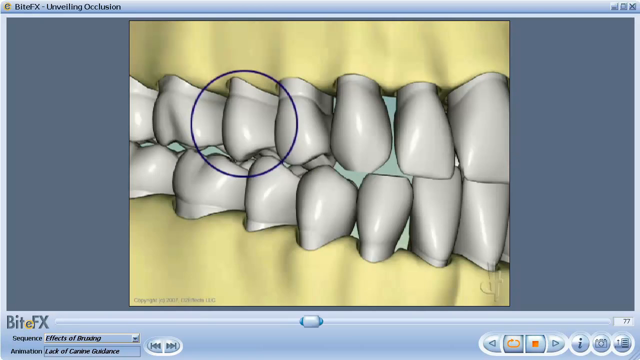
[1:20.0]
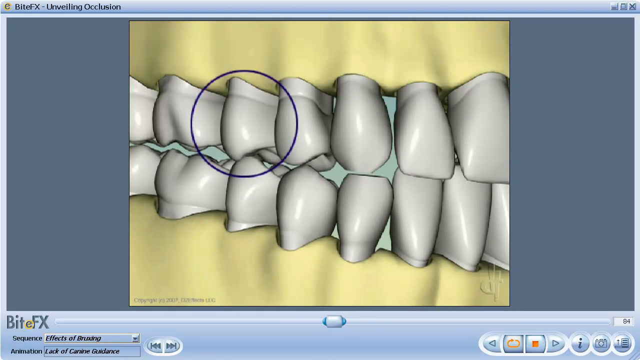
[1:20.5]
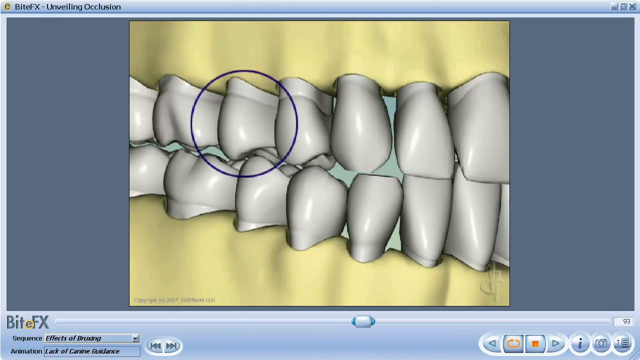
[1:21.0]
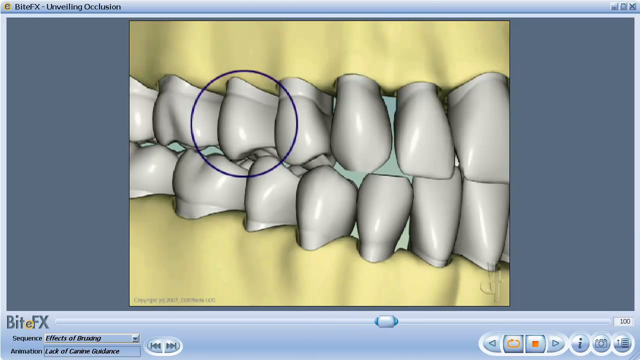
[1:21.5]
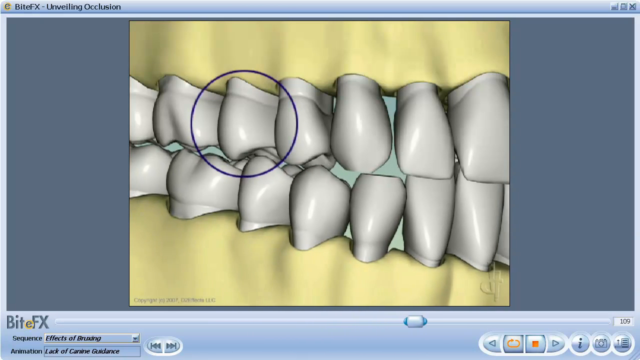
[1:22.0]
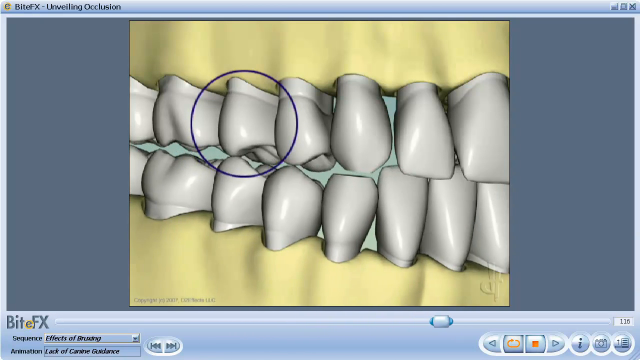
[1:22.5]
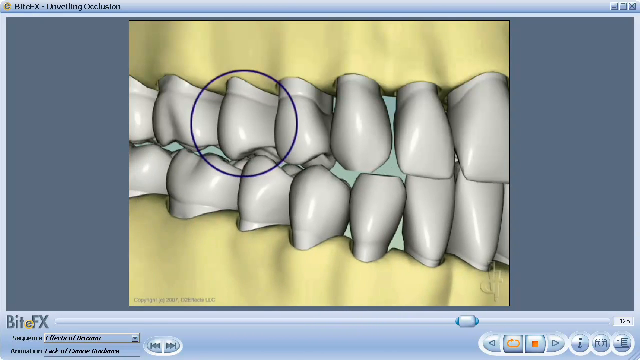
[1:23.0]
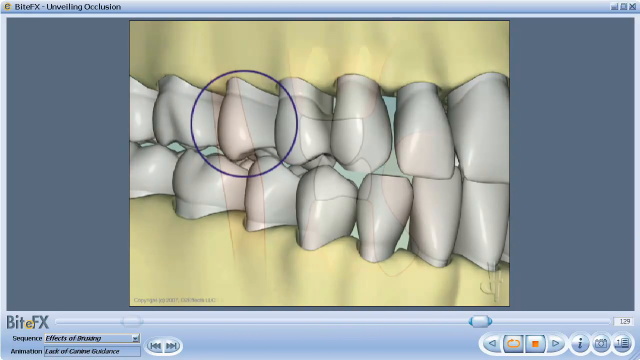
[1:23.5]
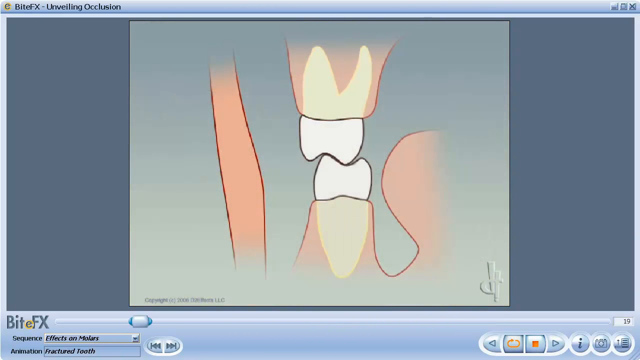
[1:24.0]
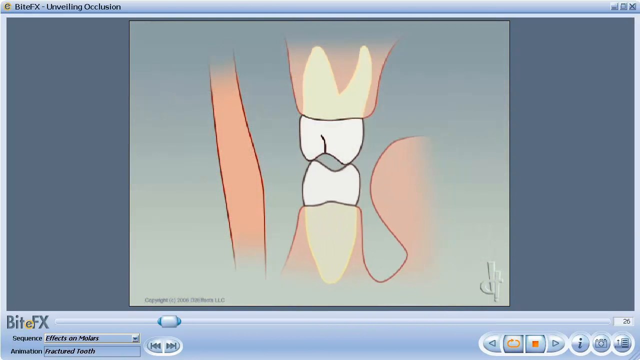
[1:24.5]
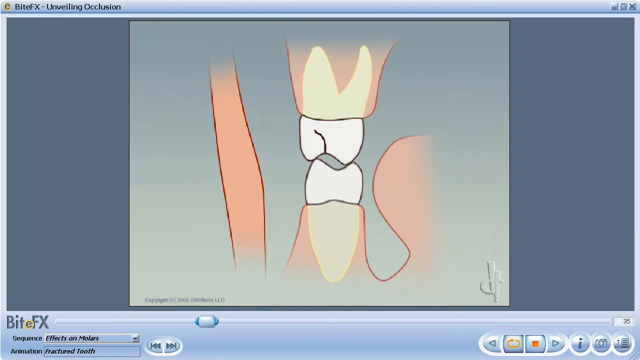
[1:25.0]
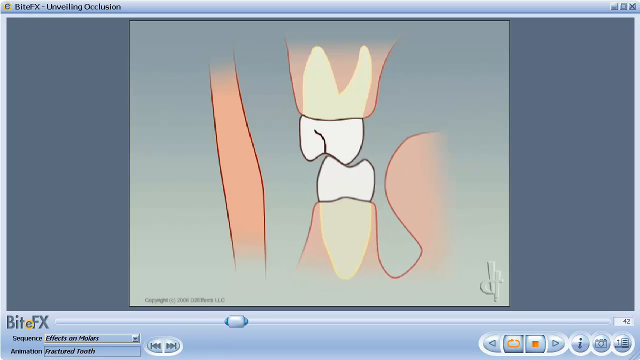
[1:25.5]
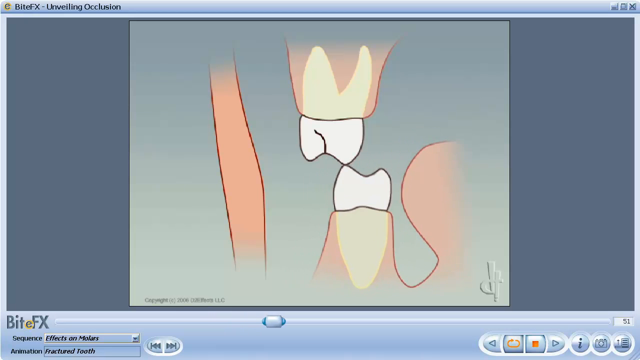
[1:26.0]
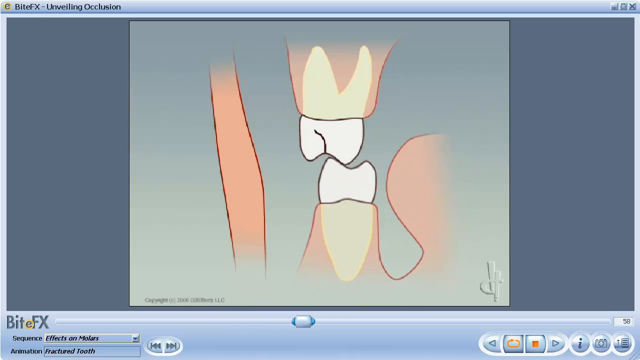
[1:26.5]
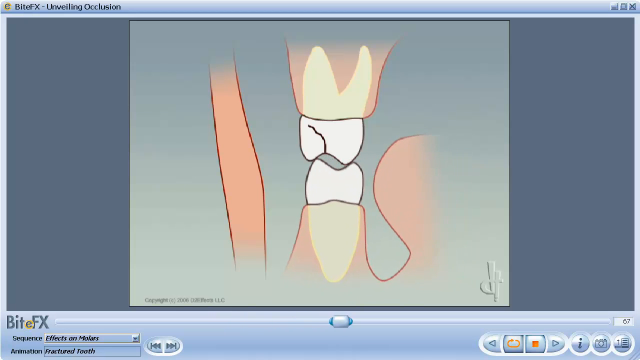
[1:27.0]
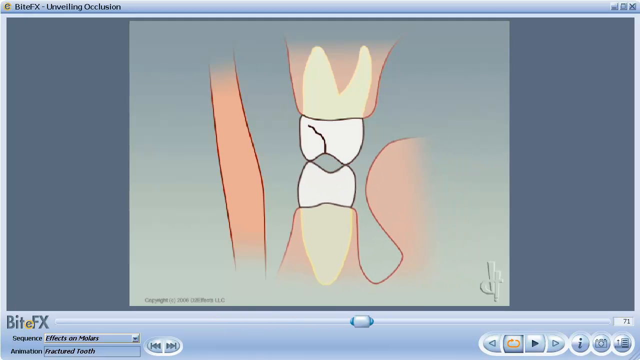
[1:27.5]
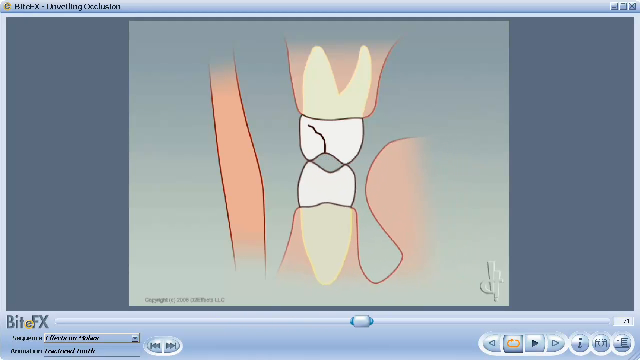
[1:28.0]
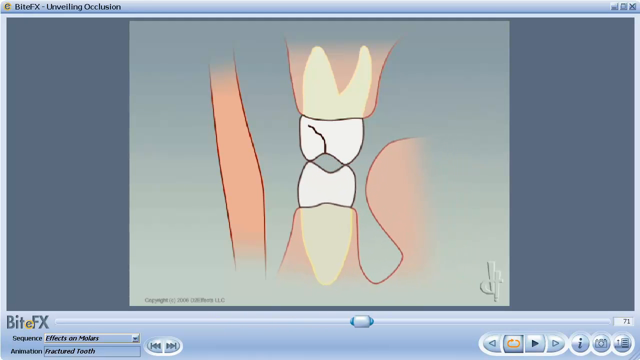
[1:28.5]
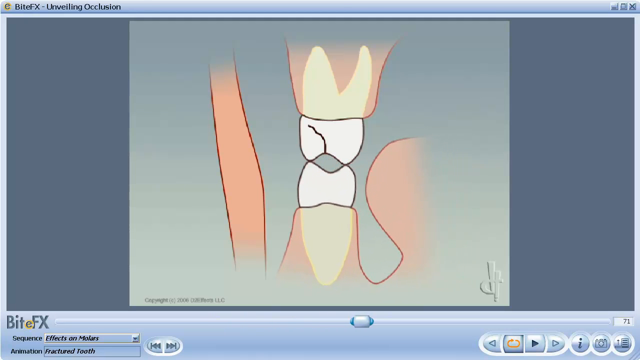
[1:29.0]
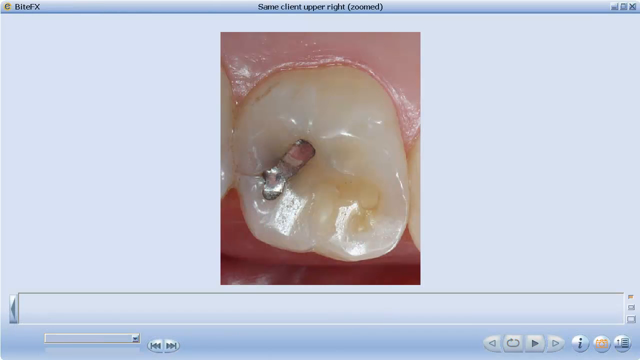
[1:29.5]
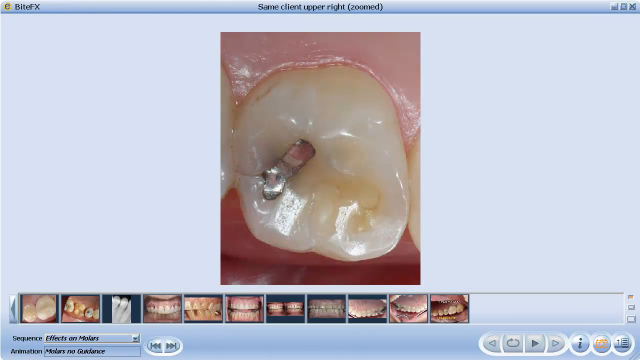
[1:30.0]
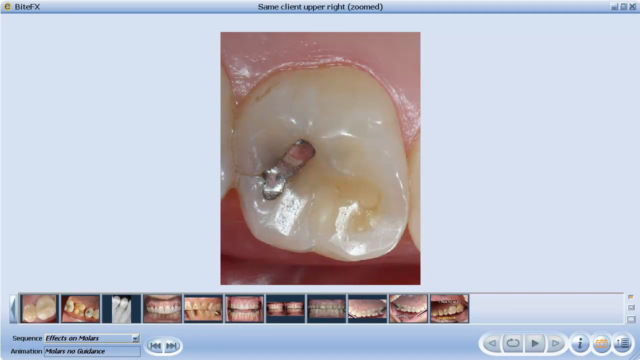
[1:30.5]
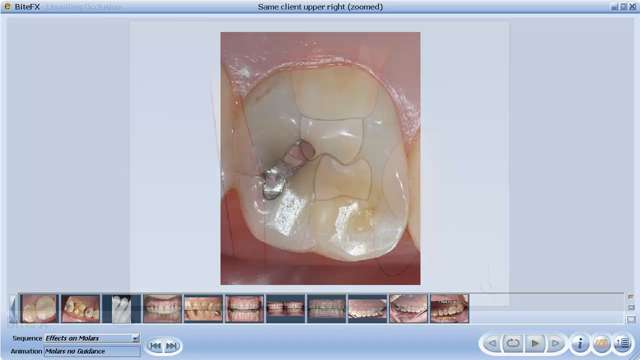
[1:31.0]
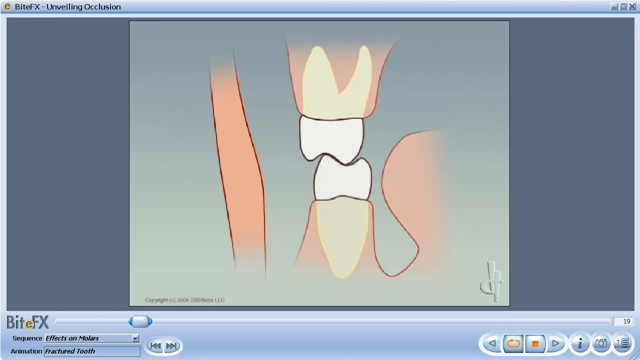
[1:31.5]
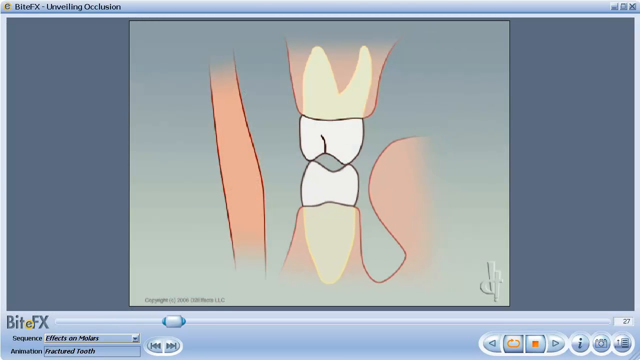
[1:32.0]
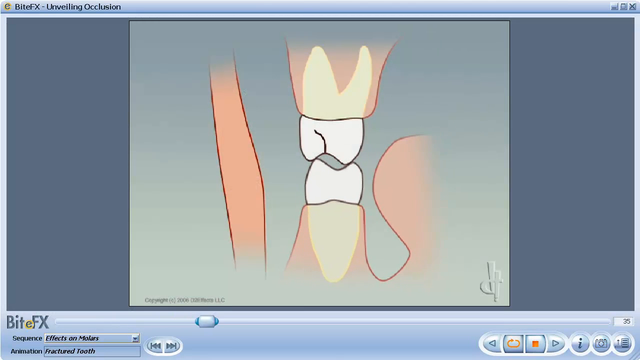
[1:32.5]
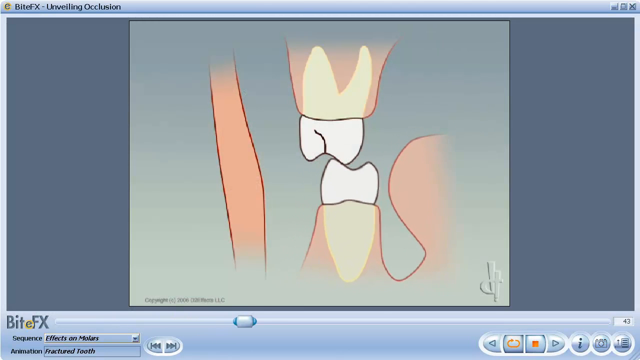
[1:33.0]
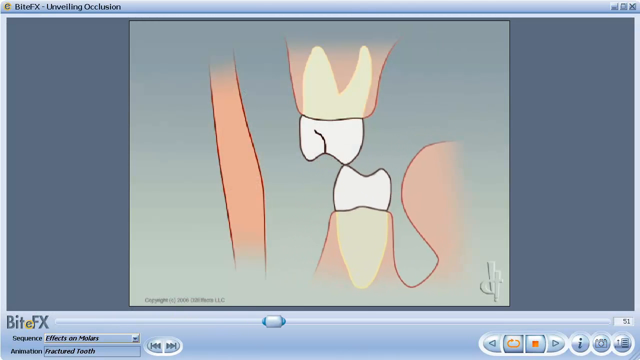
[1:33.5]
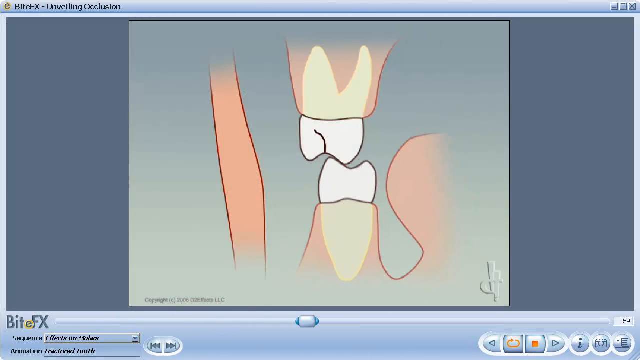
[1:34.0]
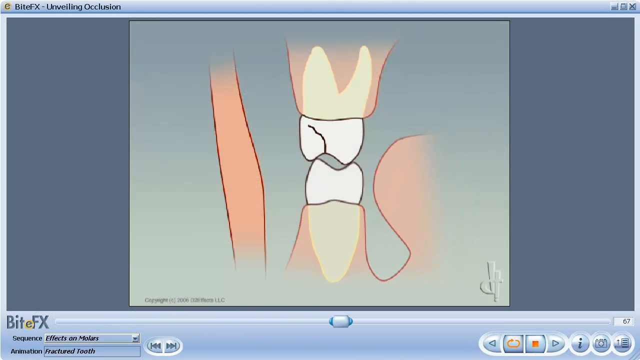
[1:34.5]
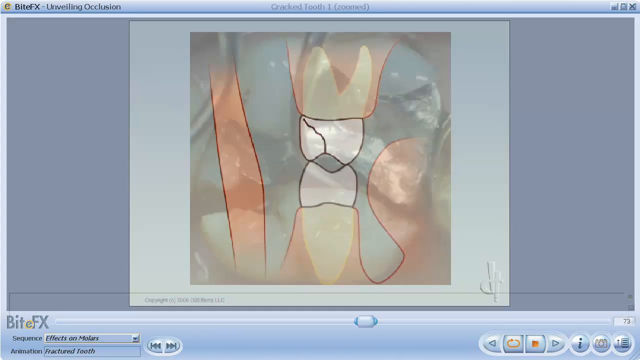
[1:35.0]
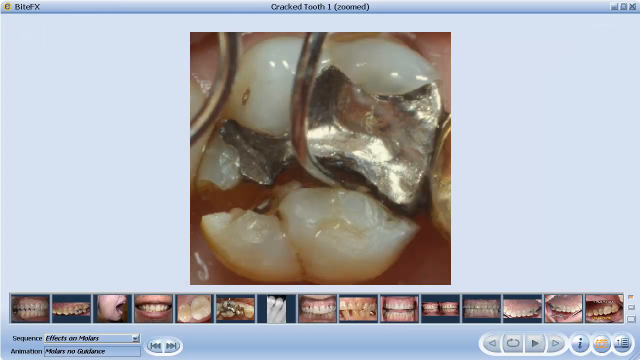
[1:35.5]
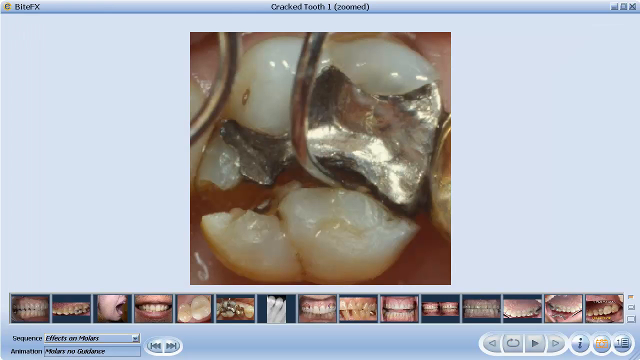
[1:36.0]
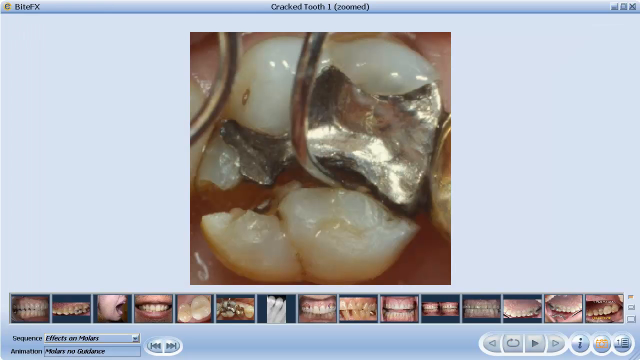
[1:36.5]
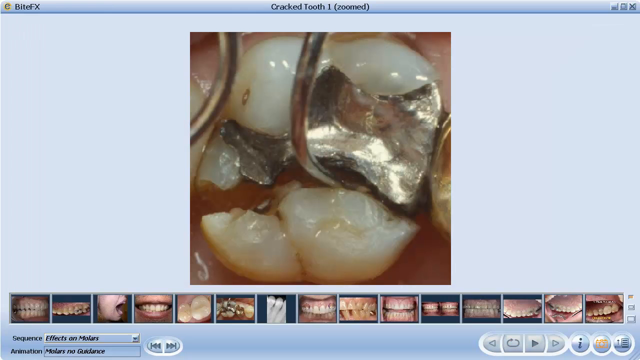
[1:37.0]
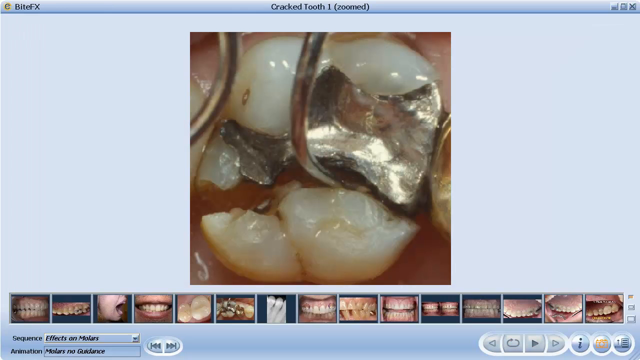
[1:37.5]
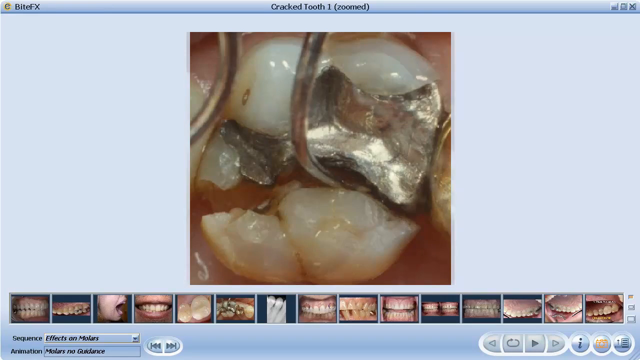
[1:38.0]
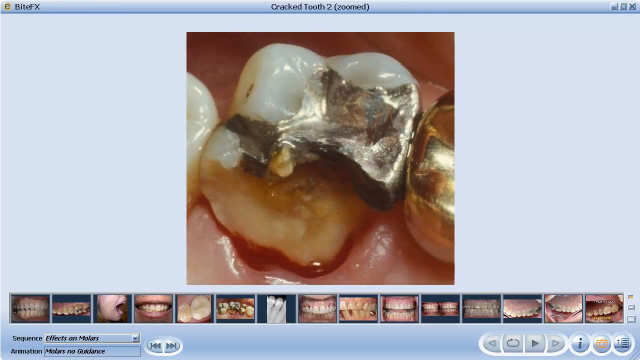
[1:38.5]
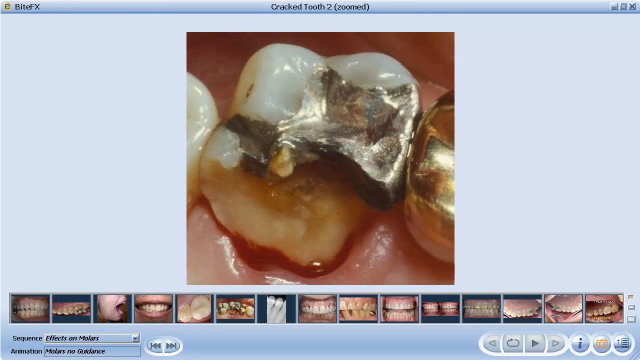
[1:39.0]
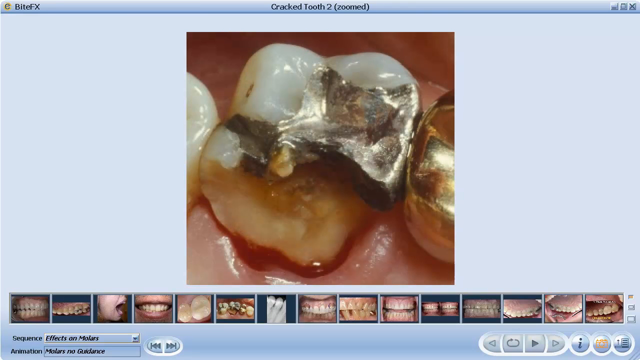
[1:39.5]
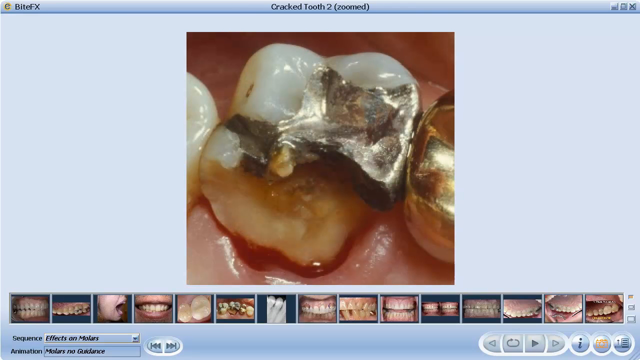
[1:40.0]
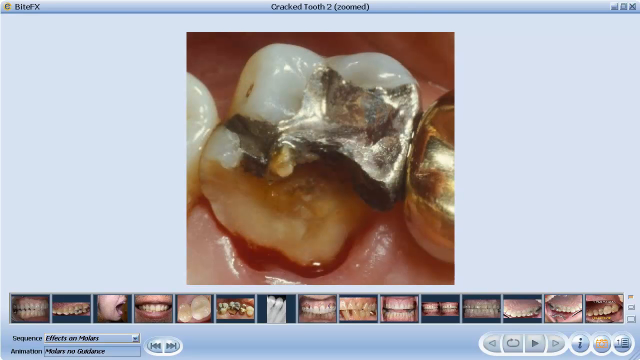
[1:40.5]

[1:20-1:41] Teeth are shown kind of touching other teeth, with a blue circle going over some of them. The teeth move back and forth, grinding other teeth, and one tooth looks loose as it grinds. Another animation shows a tooth touching another tooth; one of the teeth cracks as it grinds, cracking further each time. Then a tooth that looks like it has a filling appears, with a bar of other teeth photos below it. The tooth continues to crack all the way up, and the view moves to another cracked tooth with filling inside it. It then transitions to a photo of a cracked tooth with some silver and gold.